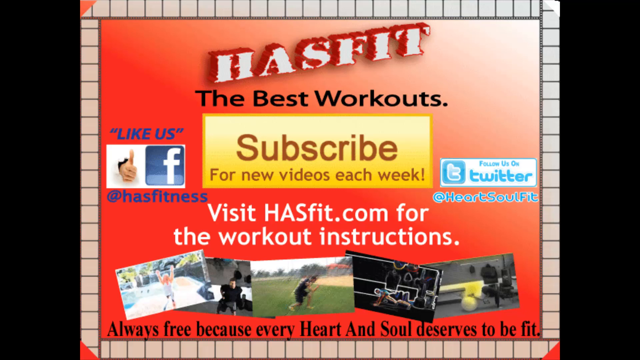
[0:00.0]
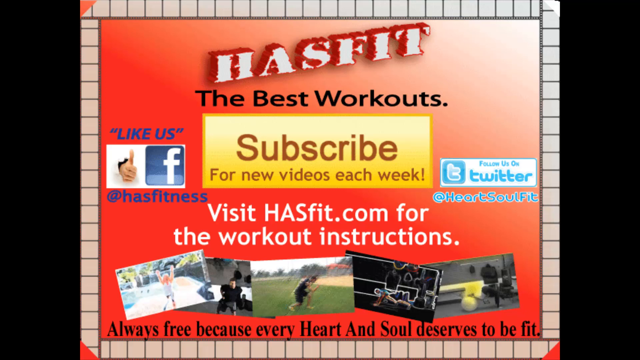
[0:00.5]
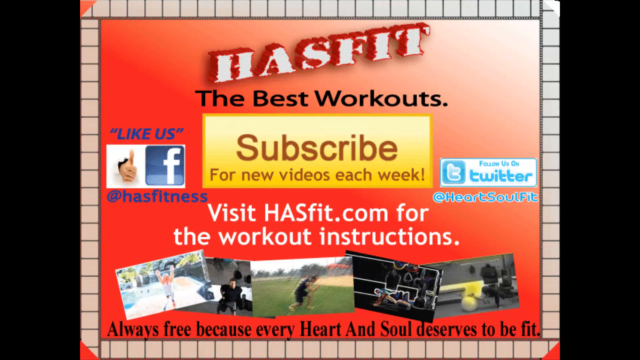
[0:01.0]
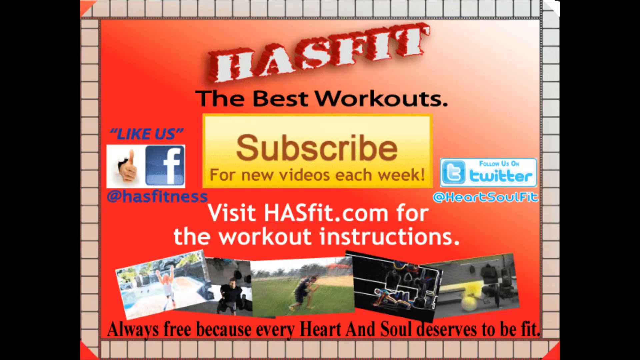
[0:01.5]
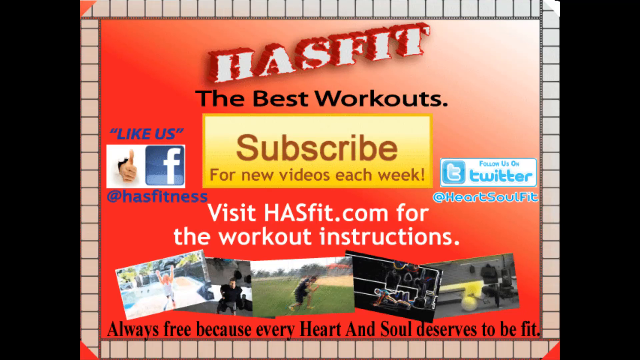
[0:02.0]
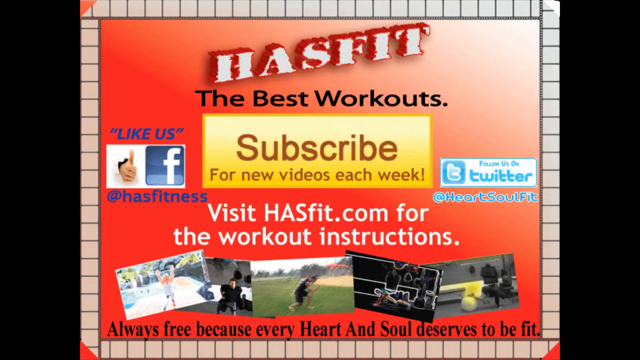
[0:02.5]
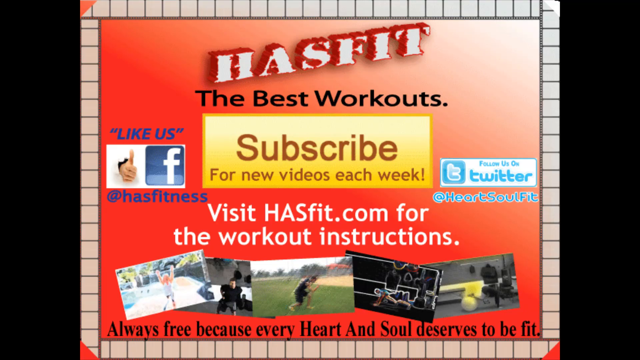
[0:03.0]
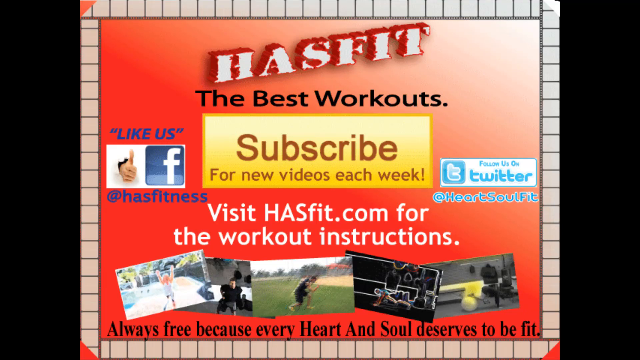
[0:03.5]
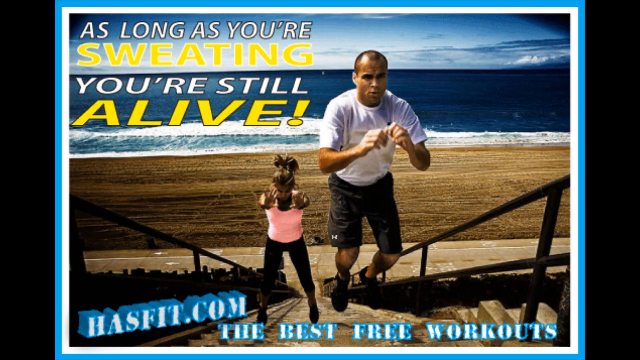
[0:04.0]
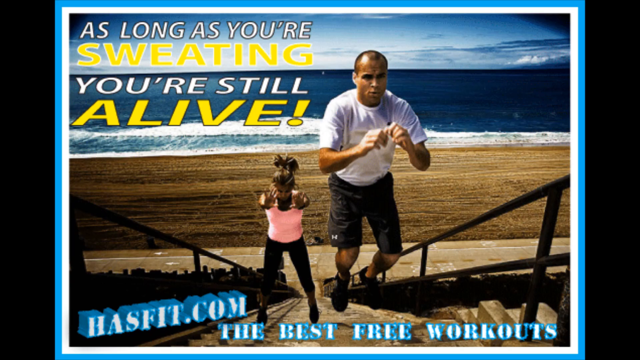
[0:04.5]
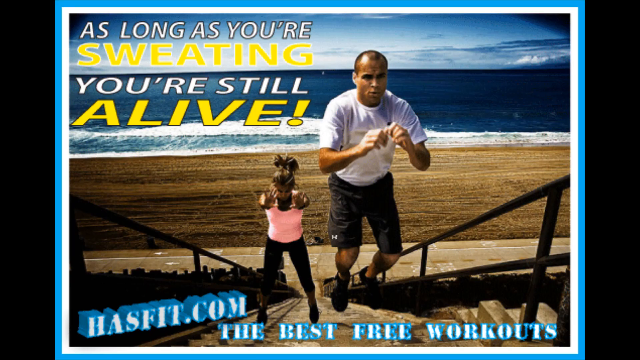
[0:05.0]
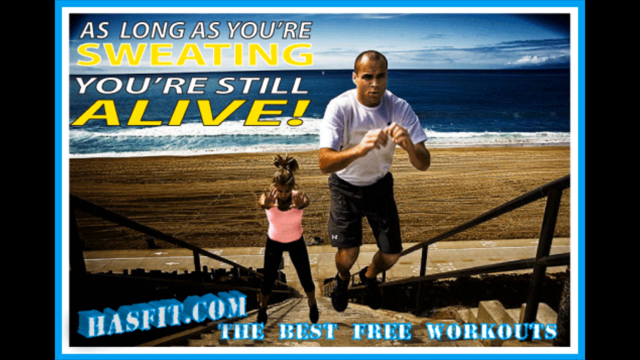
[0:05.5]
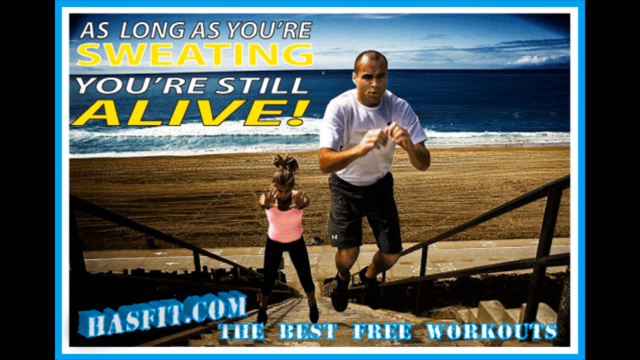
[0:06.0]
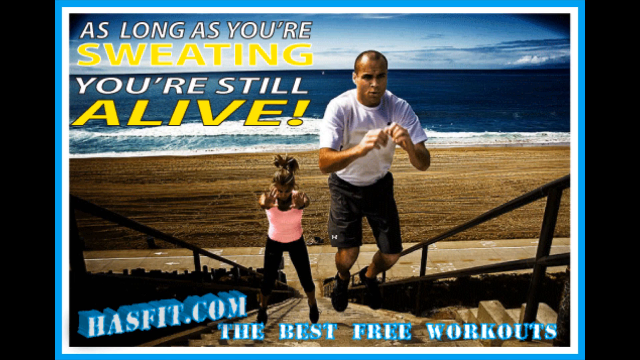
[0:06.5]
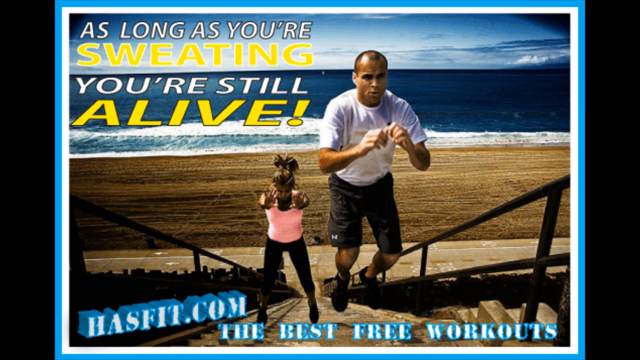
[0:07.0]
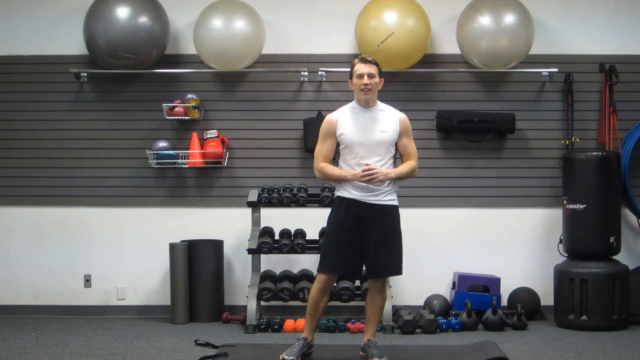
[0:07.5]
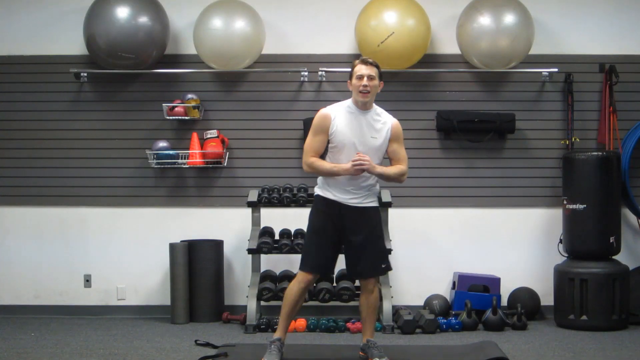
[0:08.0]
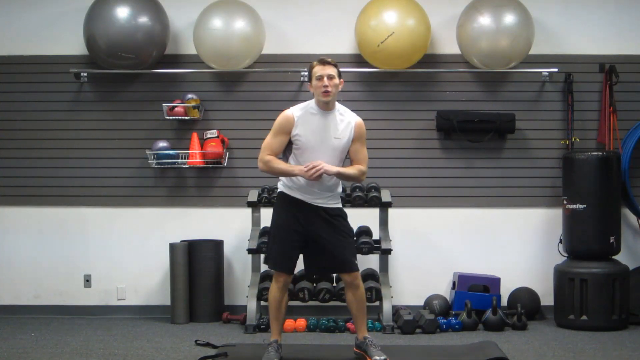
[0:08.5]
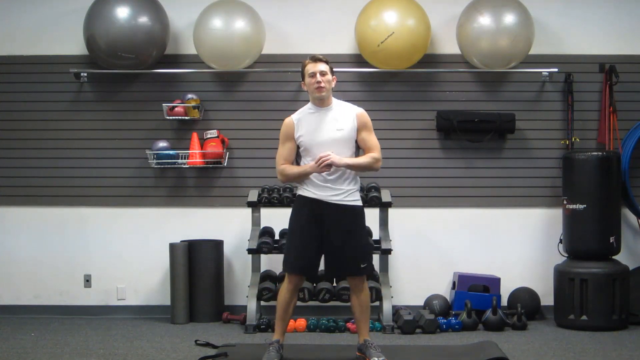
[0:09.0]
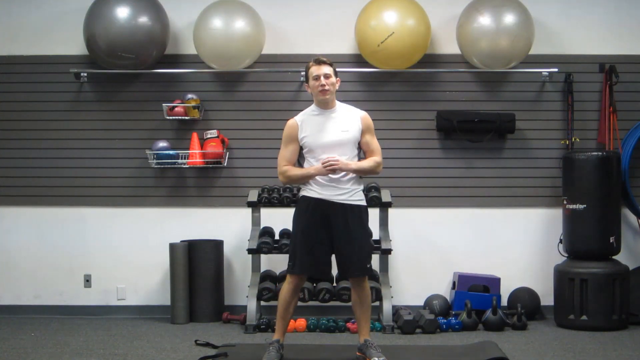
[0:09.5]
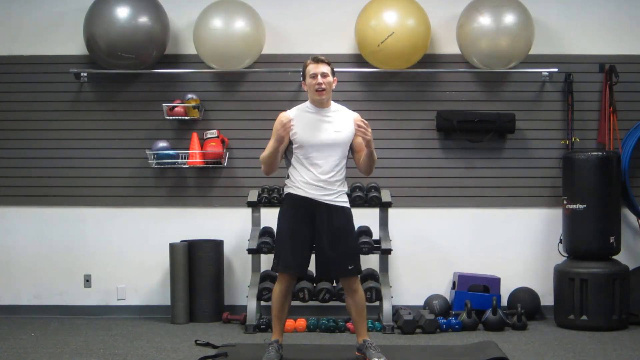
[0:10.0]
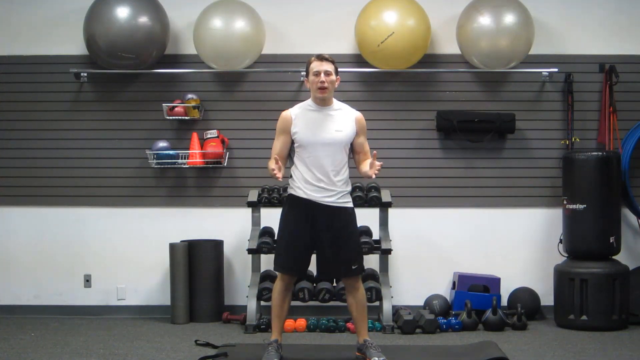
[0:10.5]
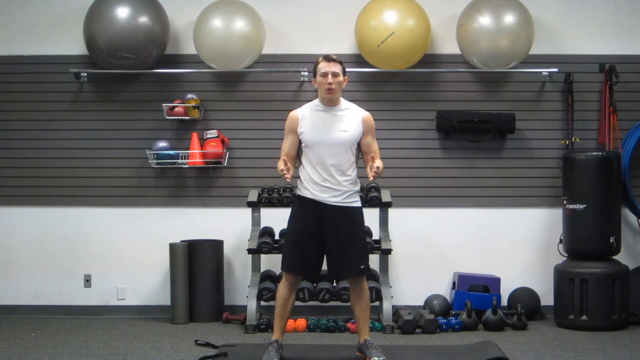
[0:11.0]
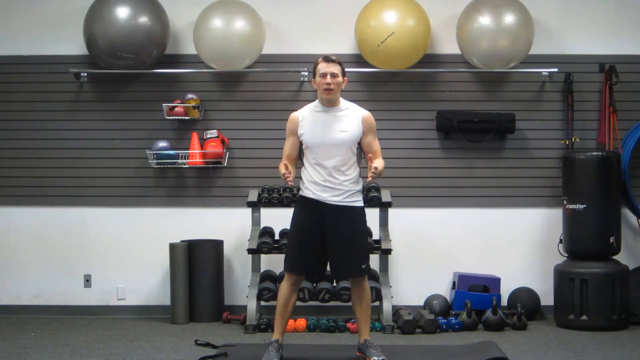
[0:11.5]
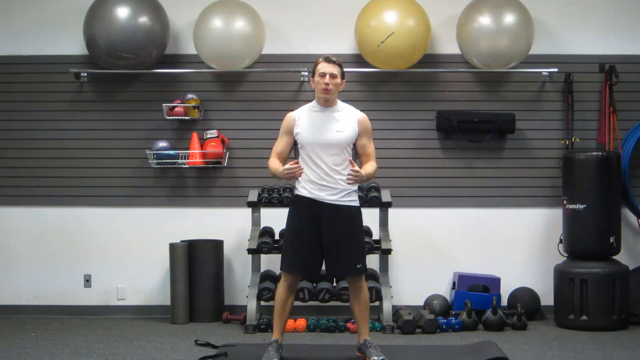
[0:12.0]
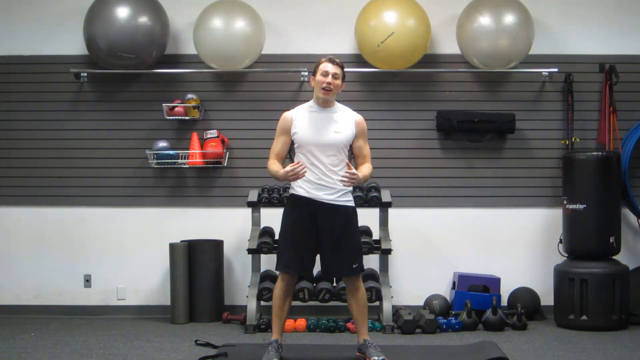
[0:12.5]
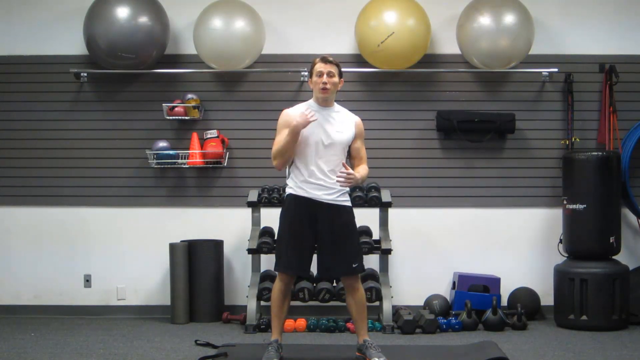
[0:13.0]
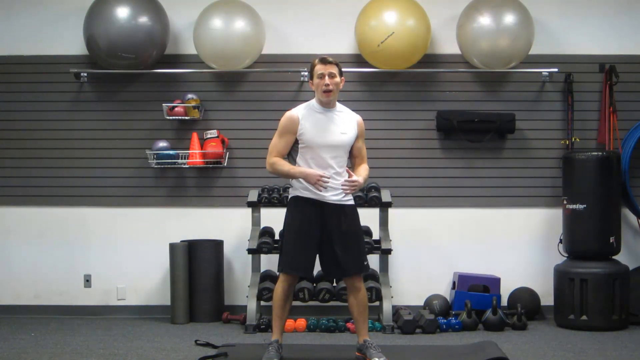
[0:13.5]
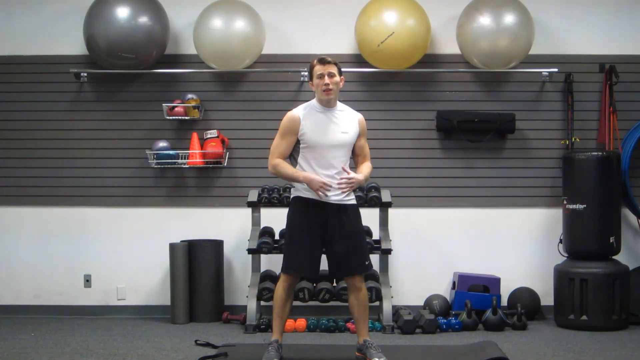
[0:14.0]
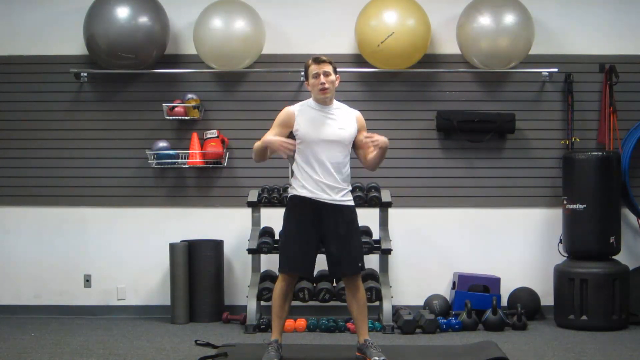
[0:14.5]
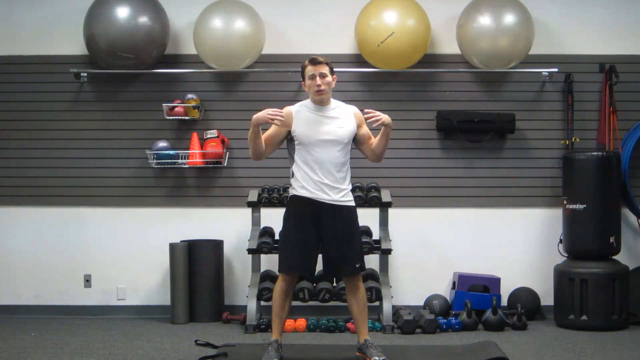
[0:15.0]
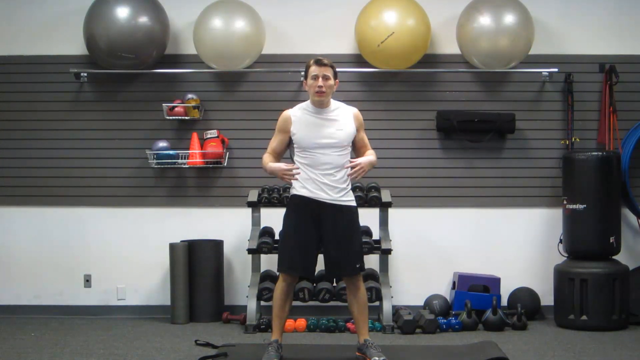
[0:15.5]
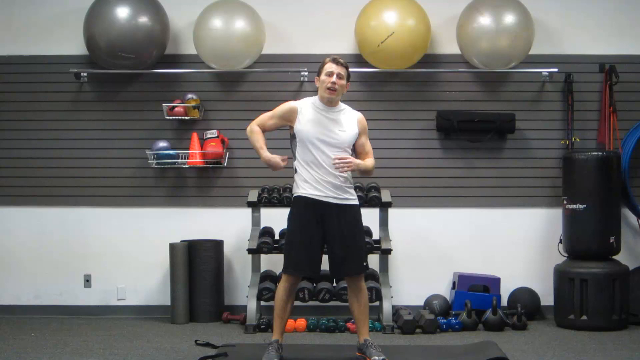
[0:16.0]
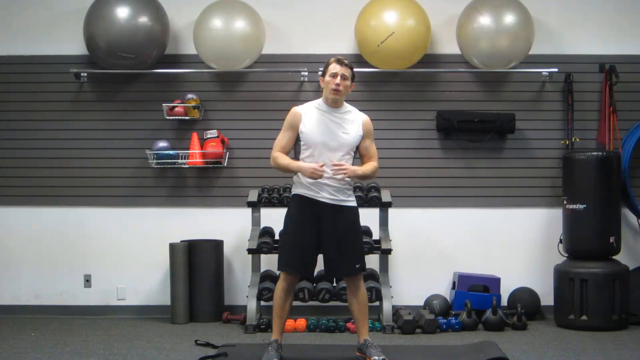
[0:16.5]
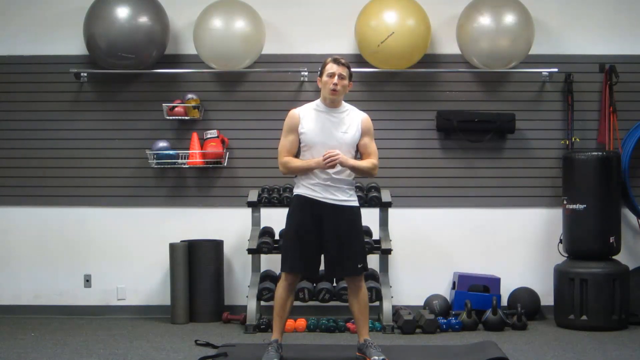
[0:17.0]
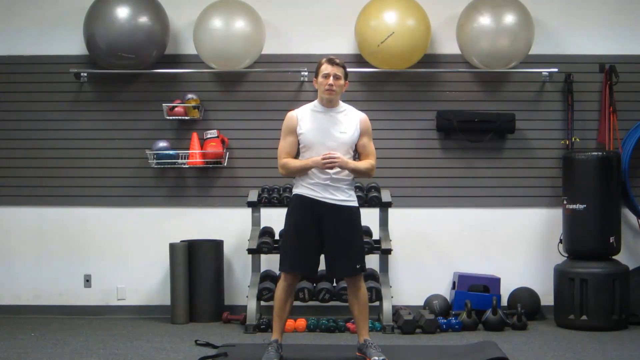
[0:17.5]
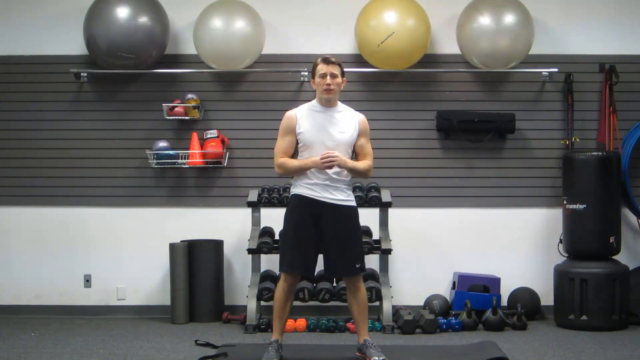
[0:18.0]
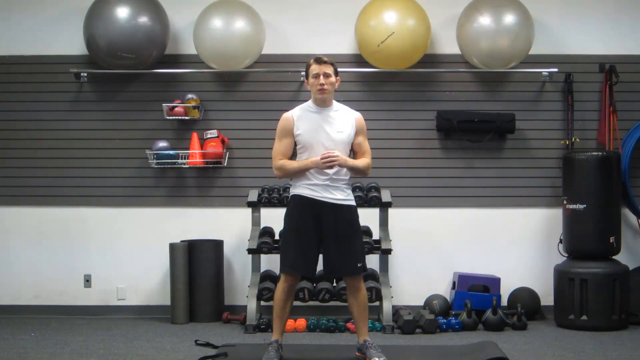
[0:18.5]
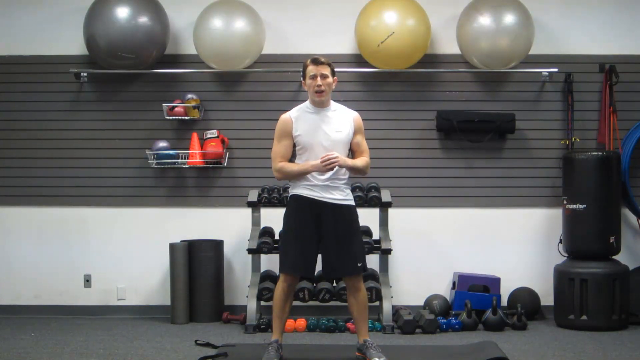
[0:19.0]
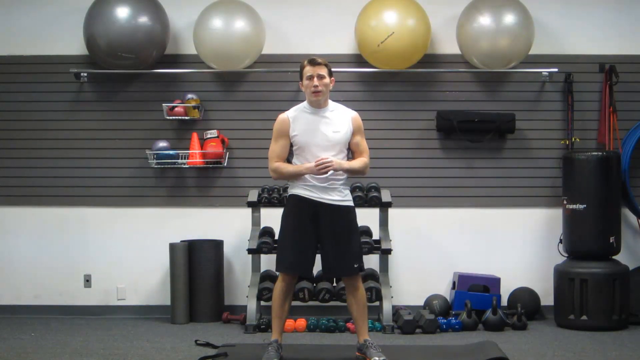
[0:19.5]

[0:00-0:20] The video opens on what seems to be an advertisement for a workout. At the very top, the title "Has Fit" runs diagonally from the bottom left to the upper right. Black text reads "The best workouts," and at the very center of the screen it says "Subscribe for new videos each week!" The banner's background is yellow, and its text seems to be red. On the left side it says "Like us on Facebook," "Follow us on Twitter, at HeartSoulFit," and "Visit HasFit.com for workout instructions." At the bottom are videos and pictures of people working out. The next screen says "As long as you're sweating, you're still alive" and shows a man jumping and walking up stairs with a woman behind him holding her hands out high. A website for the advertisement appears. Toward the middle, a man in a white muscle shirt waves his hips back, apparently in a gym-like setting.